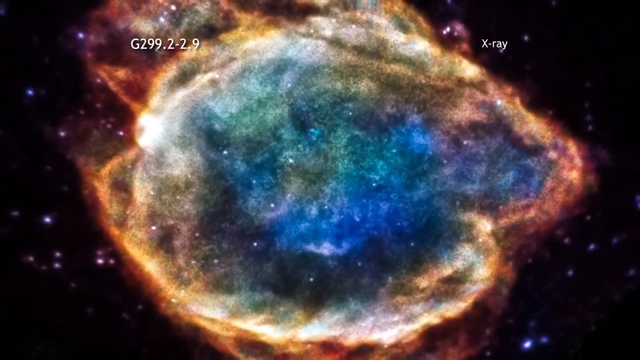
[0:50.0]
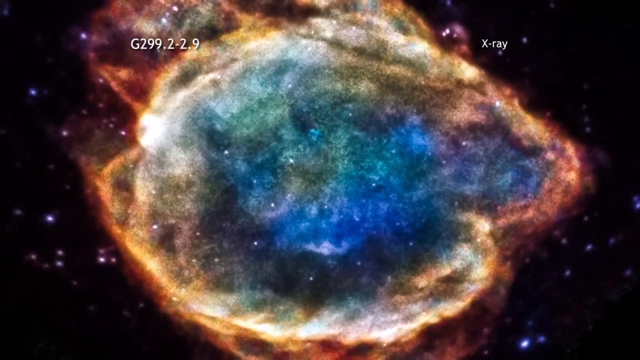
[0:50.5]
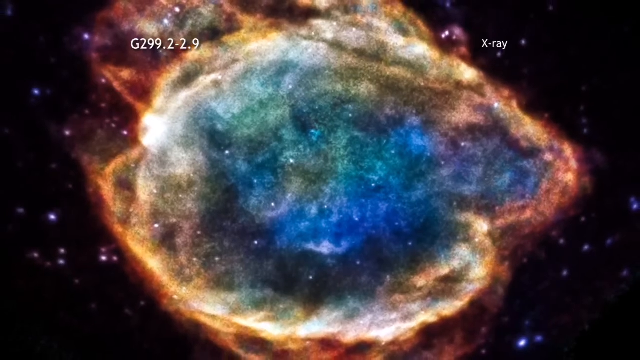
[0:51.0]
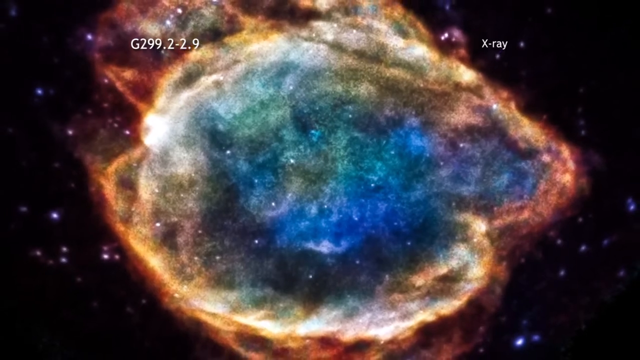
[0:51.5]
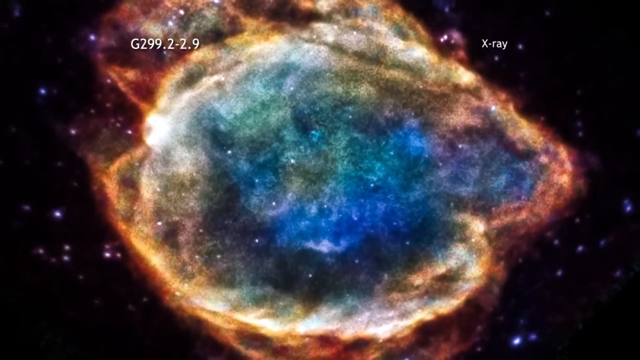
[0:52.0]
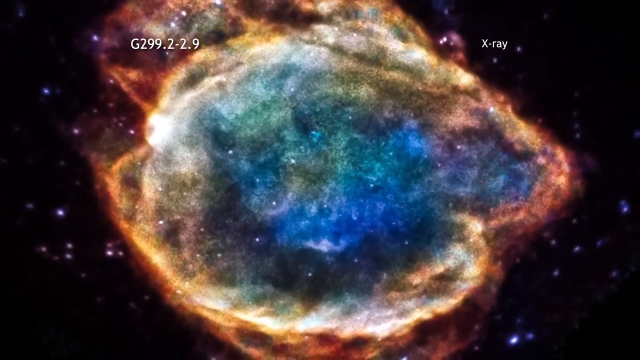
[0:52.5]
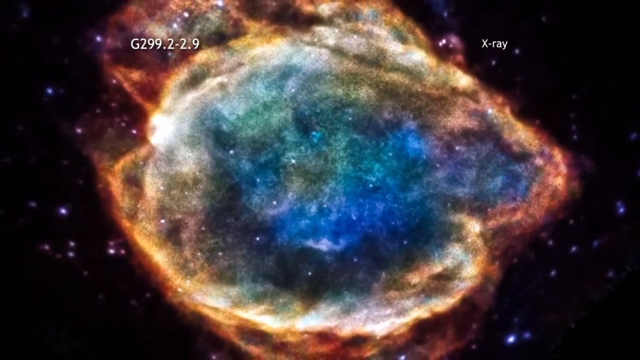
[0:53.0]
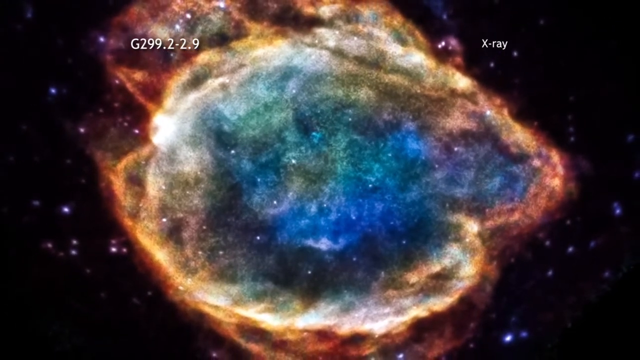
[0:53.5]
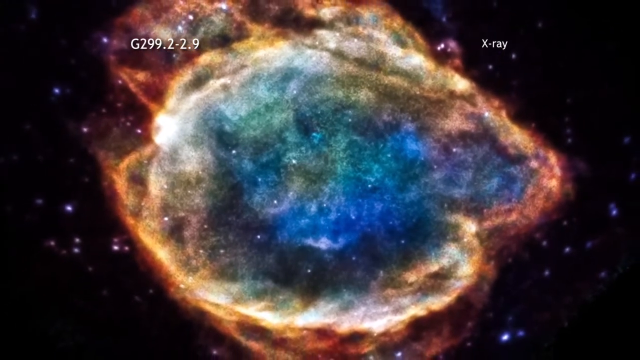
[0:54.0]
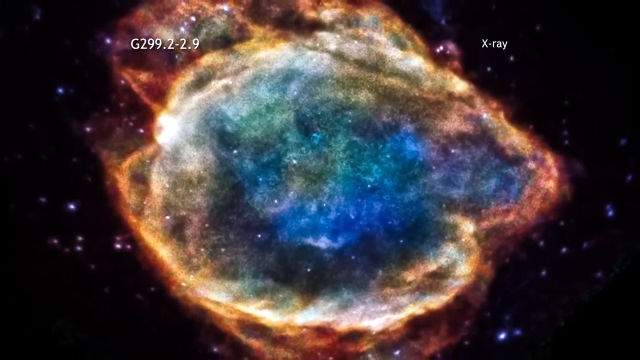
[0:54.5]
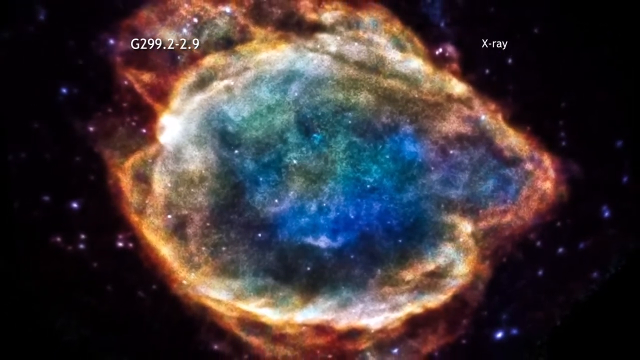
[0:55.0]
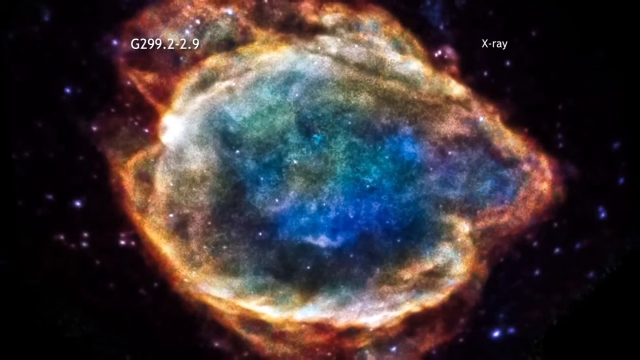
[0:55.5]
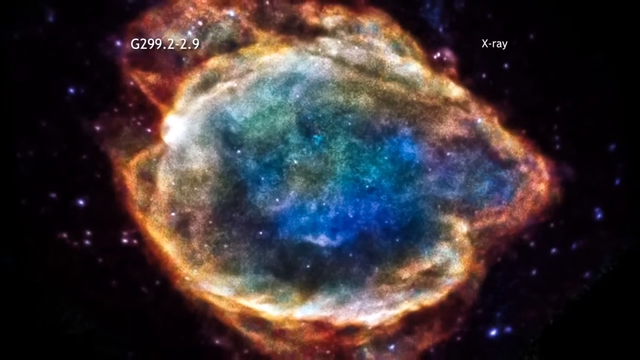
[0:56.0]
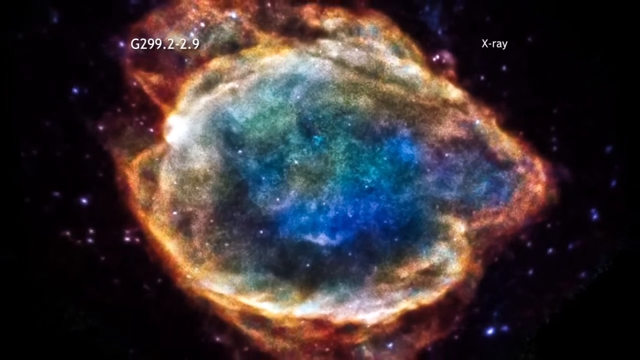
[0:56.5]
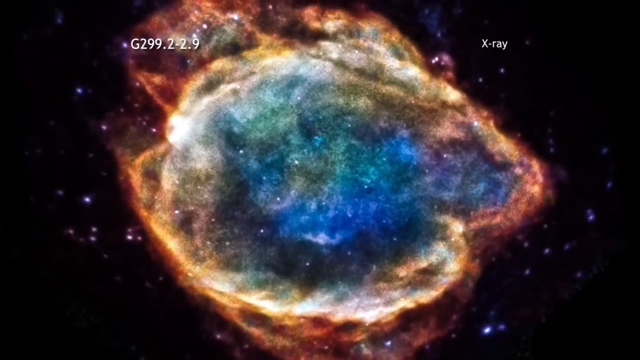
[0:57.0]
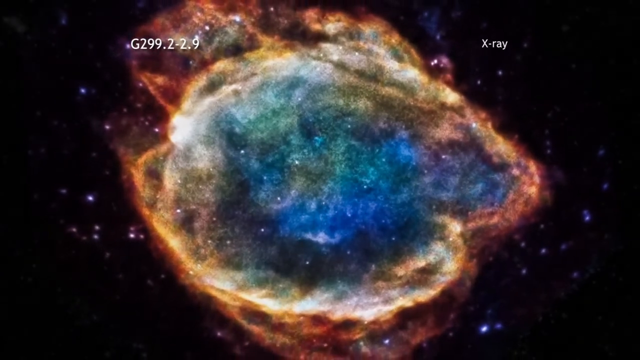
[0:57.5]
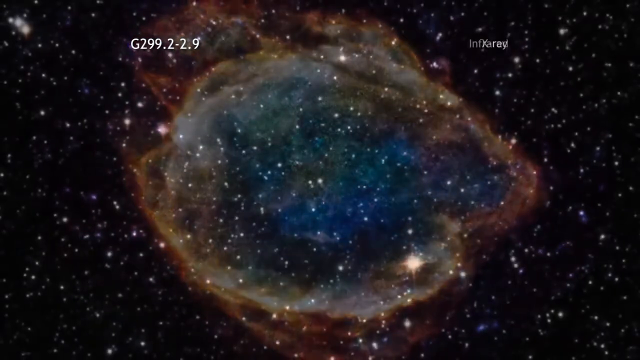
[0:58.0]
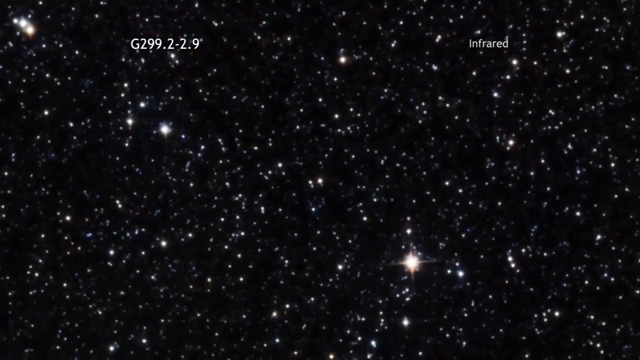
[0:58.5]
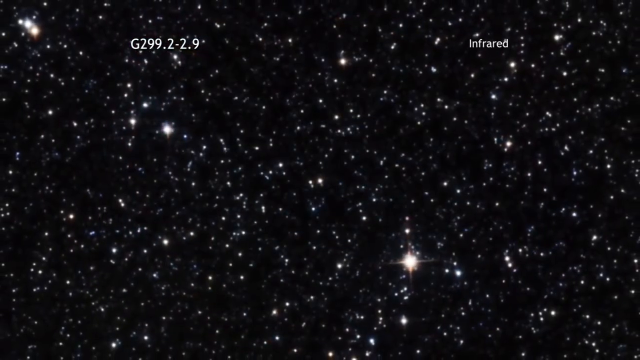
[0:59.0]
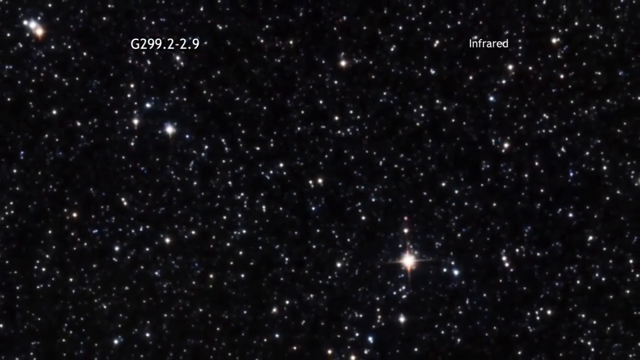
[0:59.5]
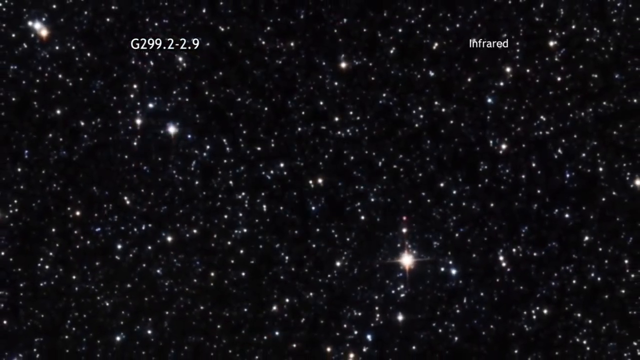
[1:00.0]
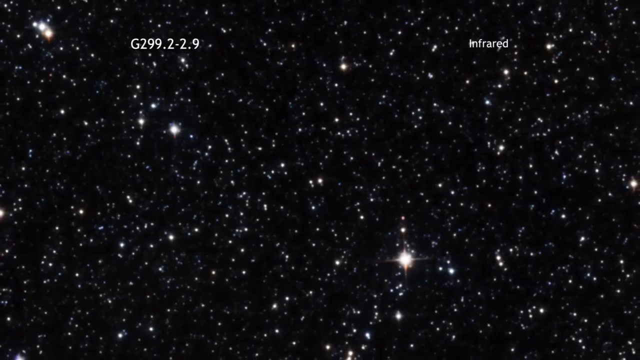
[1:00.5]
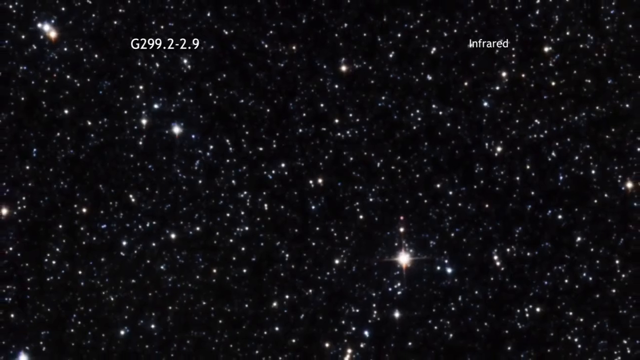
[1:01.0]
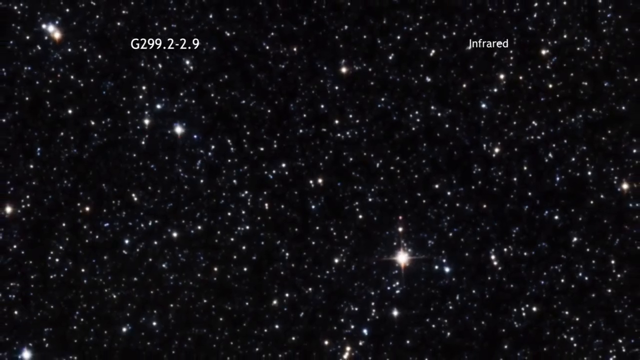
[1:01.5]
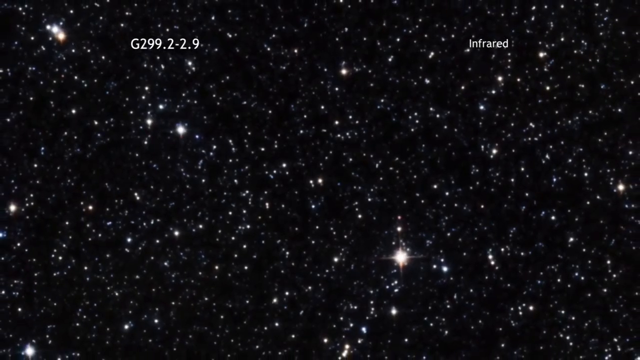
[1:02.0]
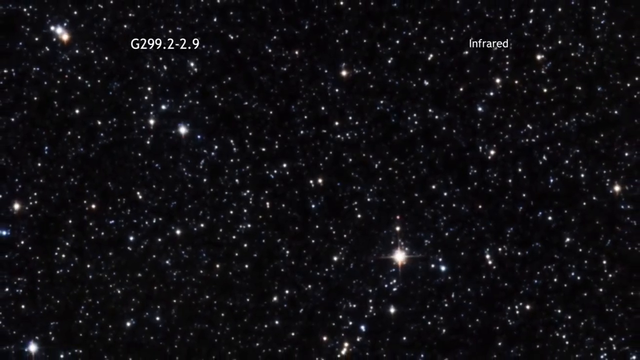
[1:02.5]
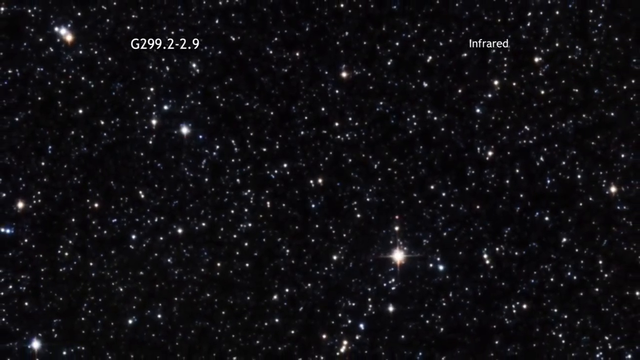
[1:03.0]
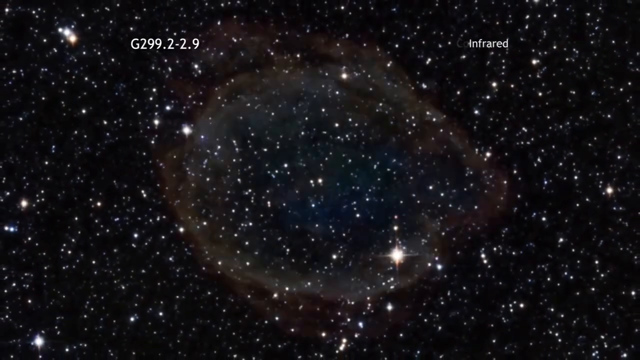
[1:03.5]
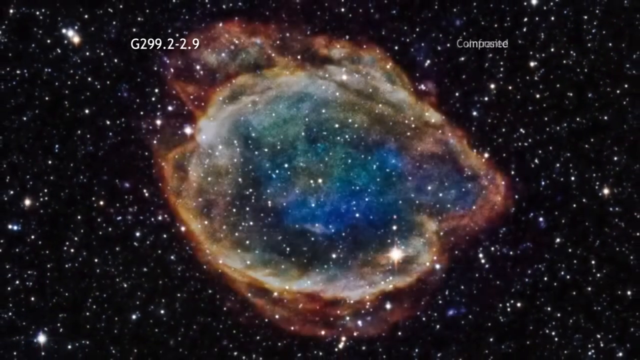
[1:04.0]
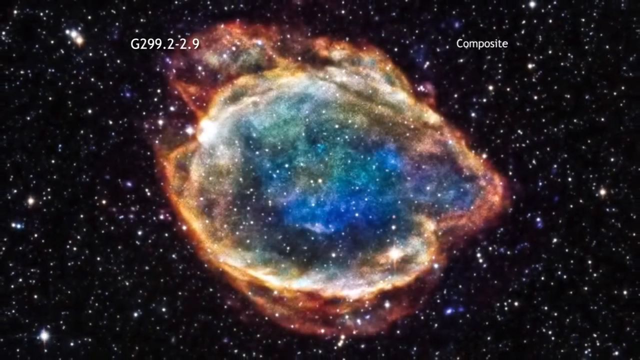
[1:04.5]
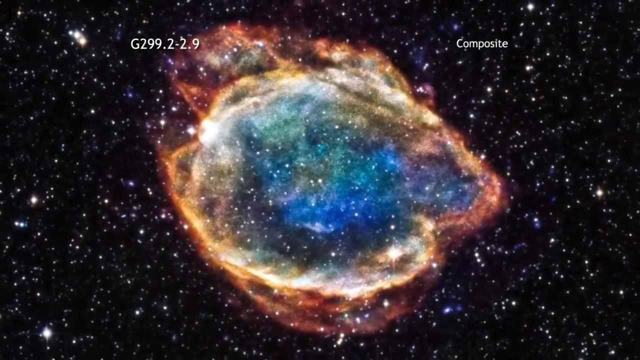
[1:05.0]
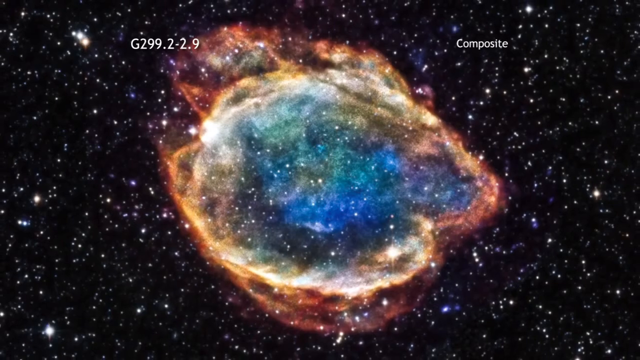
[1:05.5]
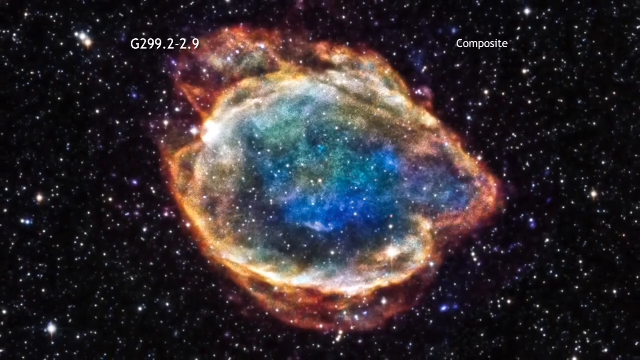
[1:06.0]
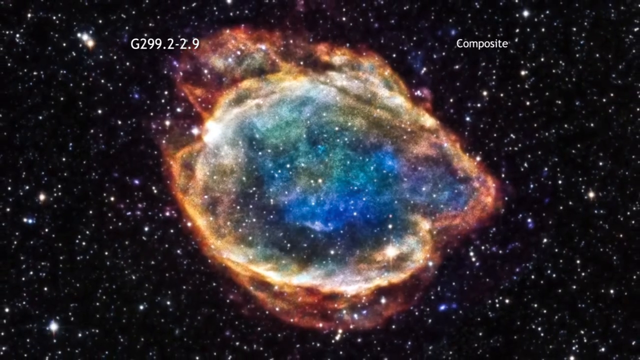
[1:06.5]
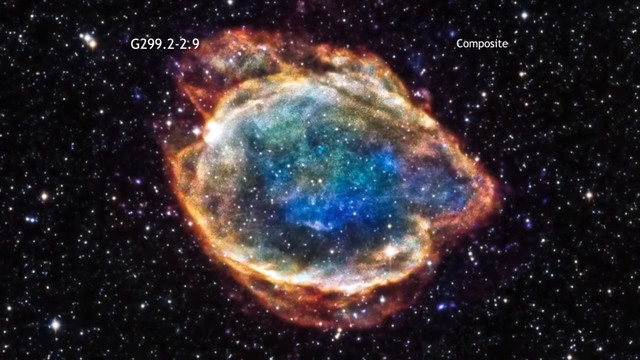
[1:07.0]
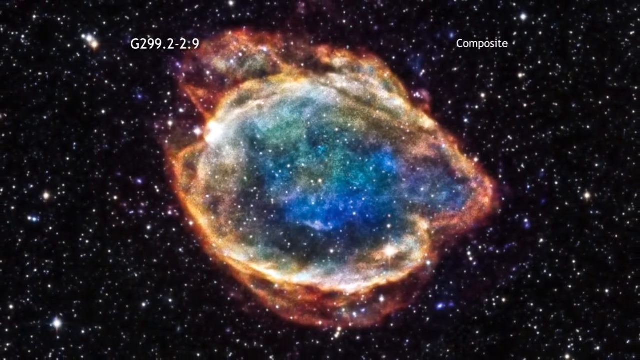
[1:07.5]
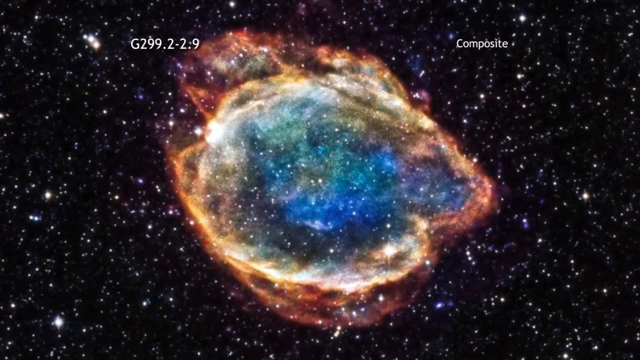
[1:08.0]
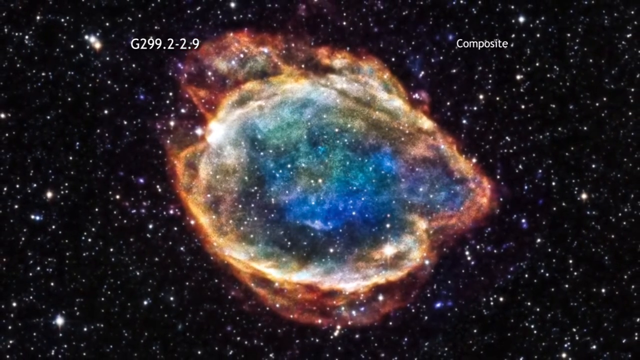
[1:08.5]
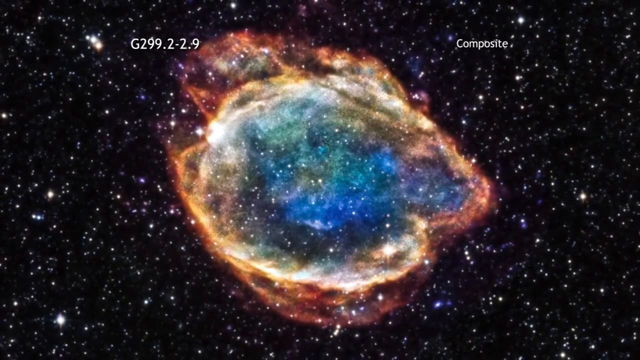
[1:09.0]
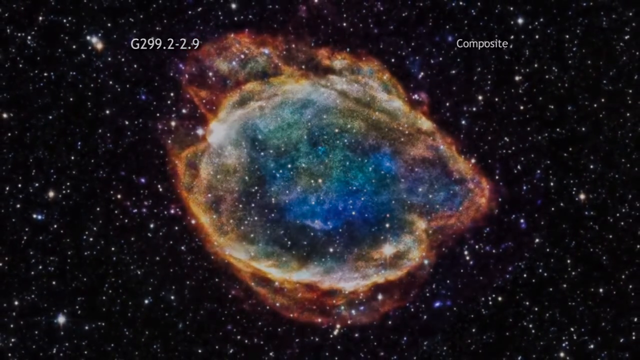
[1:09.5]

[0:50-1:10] A kind of hazy, cloudy spot is over the black sky filled with stars. It is blue and green in the center, surrounded by yellow and some white areas, which are surrounded by red. The whole circle fills the entire center of the screen from top to bottom, but not all the way from left to right. White text in the upper left corner reads "G299.2-2.9", and text on the upper right side reads "x-ray". The view slowly starts zooming out and rotating slightly to the right. Then a black sky filled with stars of all different sizes and brightnesses appears; the upper left still reads "G299.2-2.9" and the upper right reads "infrared". The view zooms out, and the circular mass is seen again, this time not filling the screen from top to bottom.